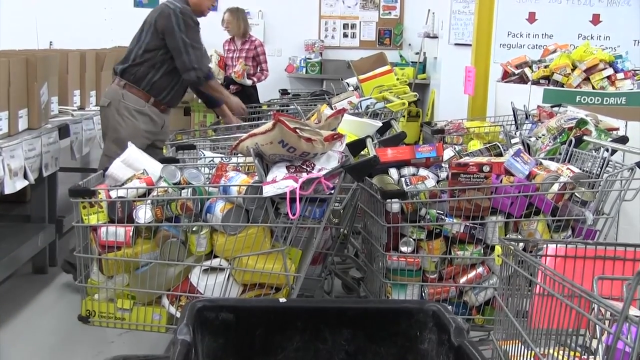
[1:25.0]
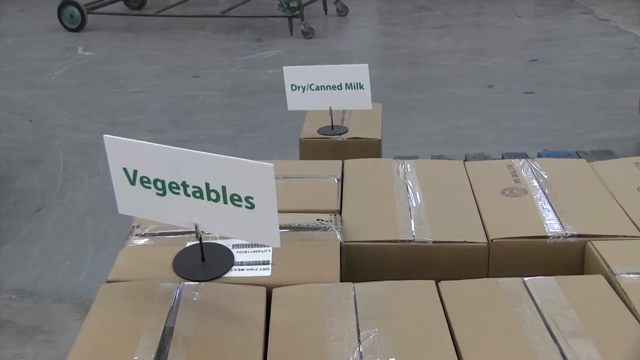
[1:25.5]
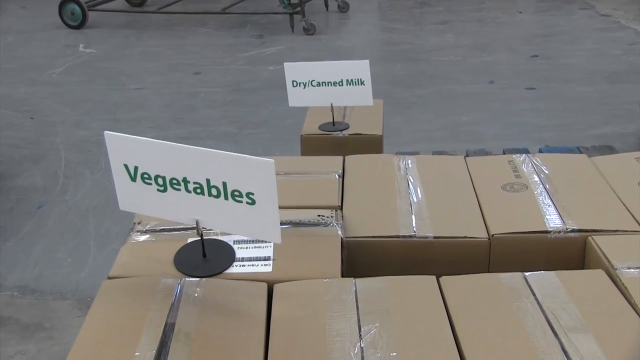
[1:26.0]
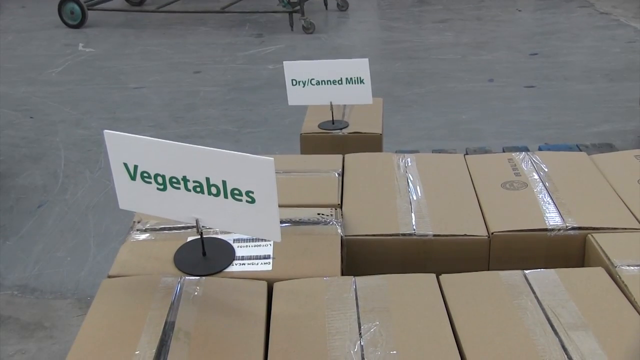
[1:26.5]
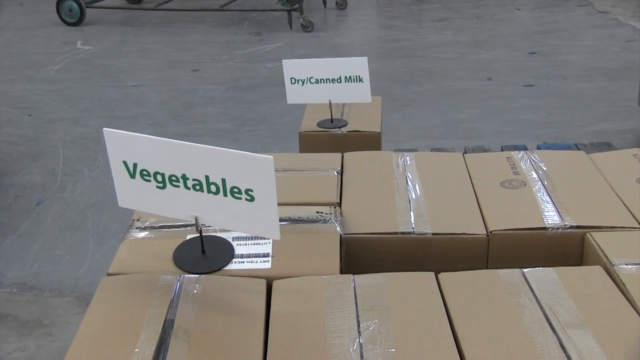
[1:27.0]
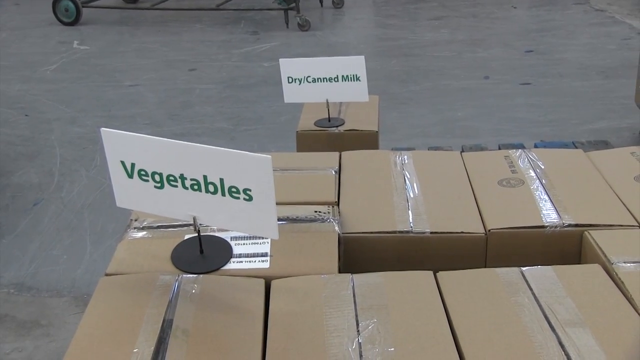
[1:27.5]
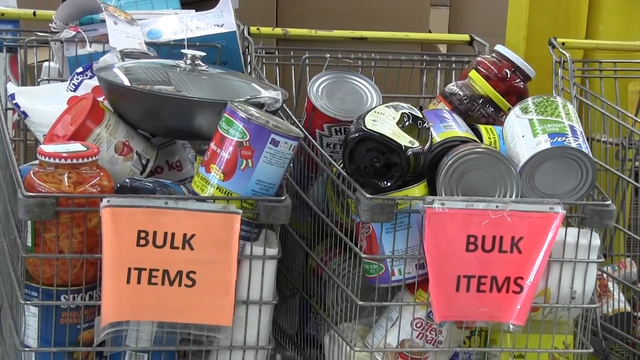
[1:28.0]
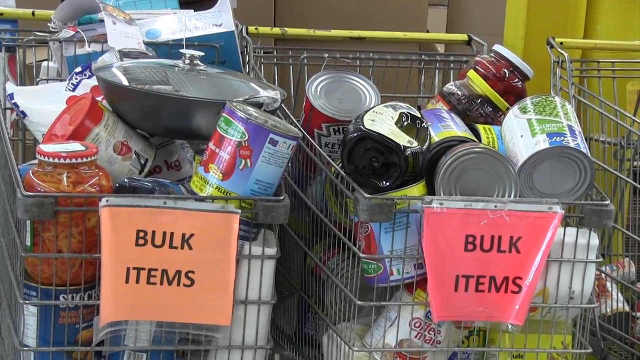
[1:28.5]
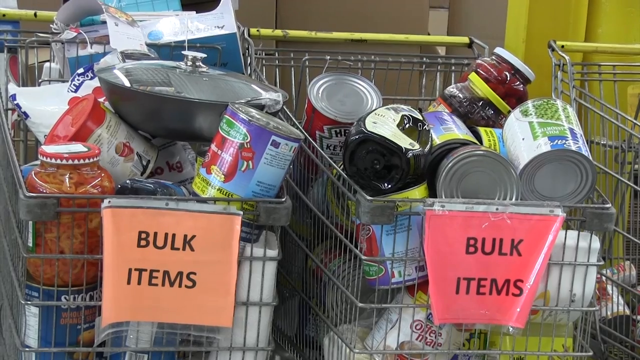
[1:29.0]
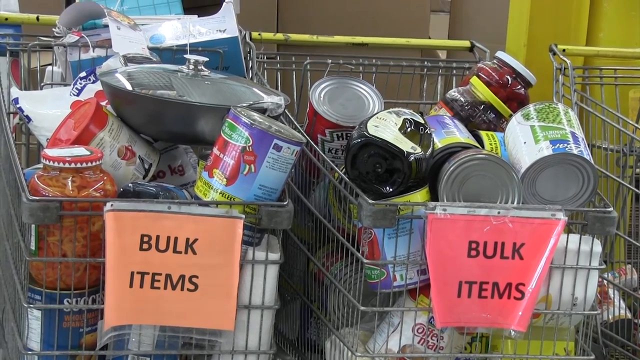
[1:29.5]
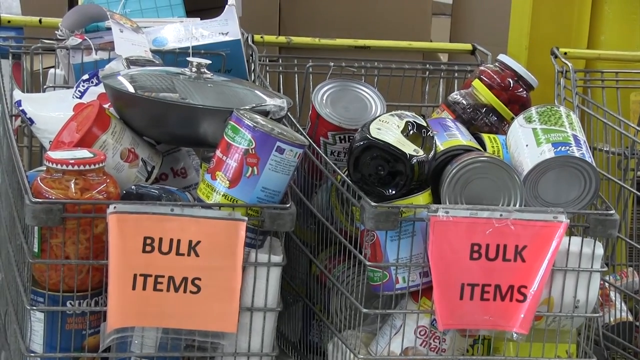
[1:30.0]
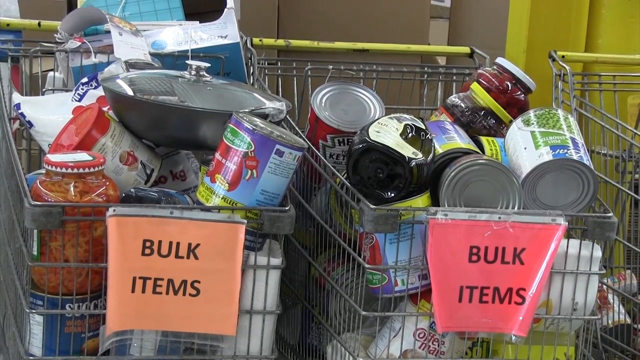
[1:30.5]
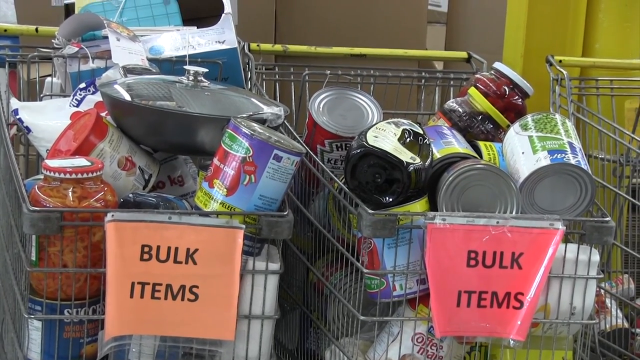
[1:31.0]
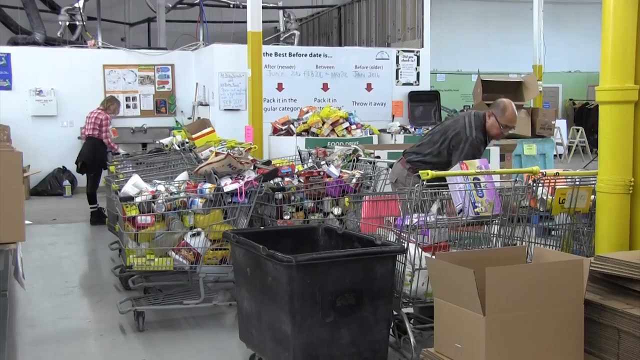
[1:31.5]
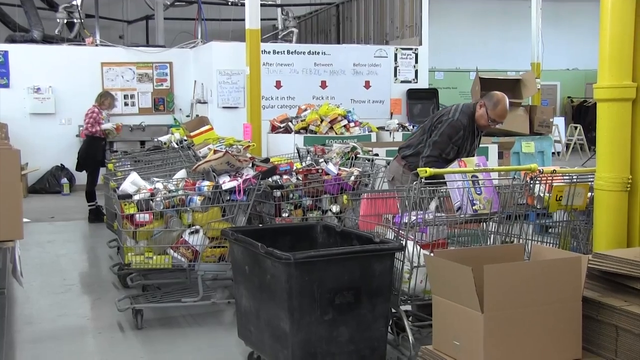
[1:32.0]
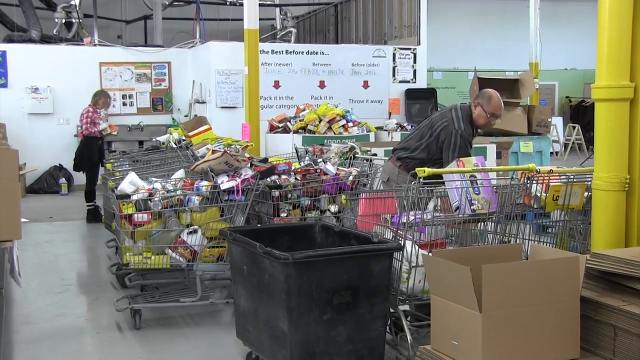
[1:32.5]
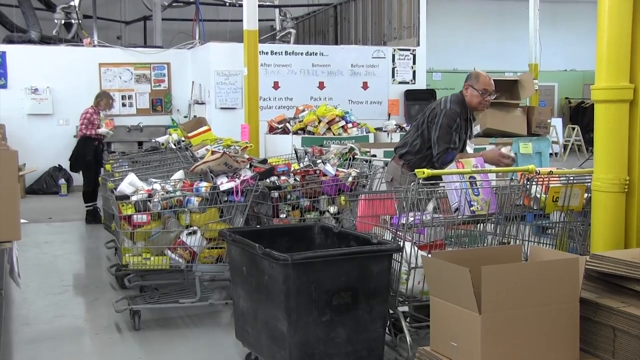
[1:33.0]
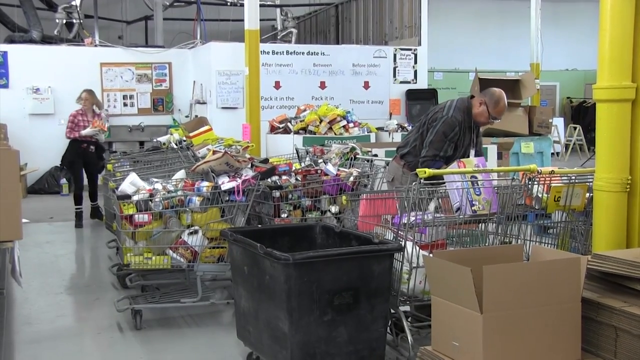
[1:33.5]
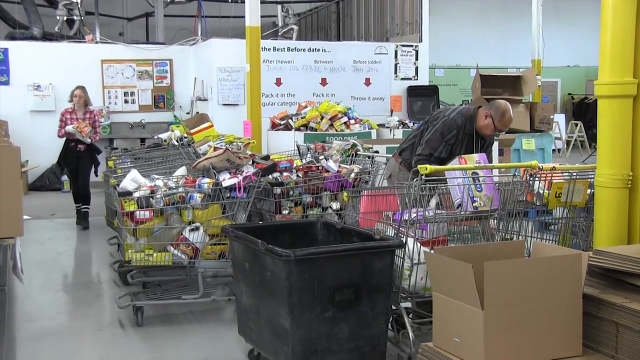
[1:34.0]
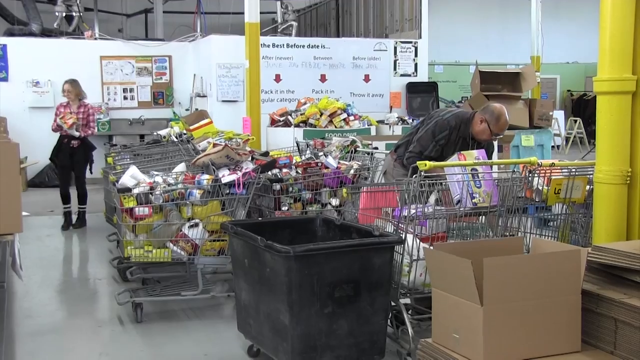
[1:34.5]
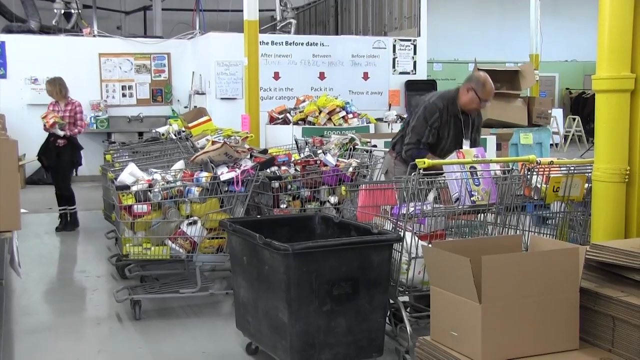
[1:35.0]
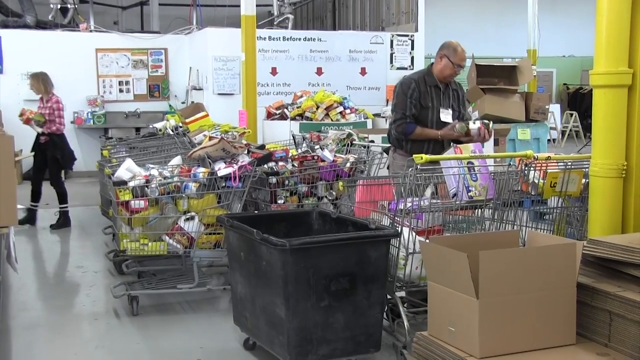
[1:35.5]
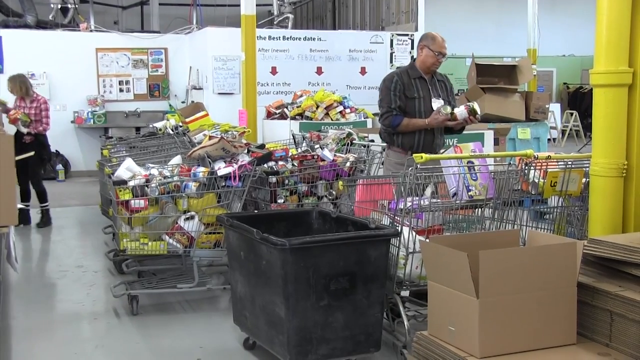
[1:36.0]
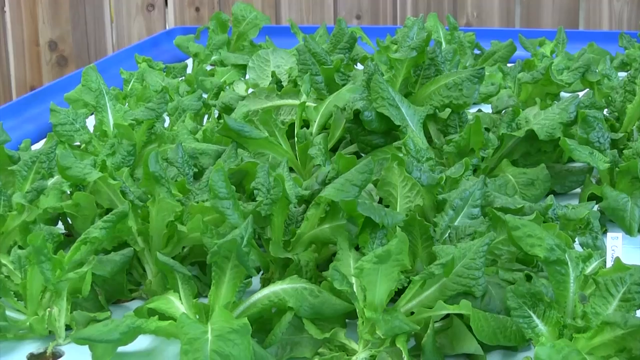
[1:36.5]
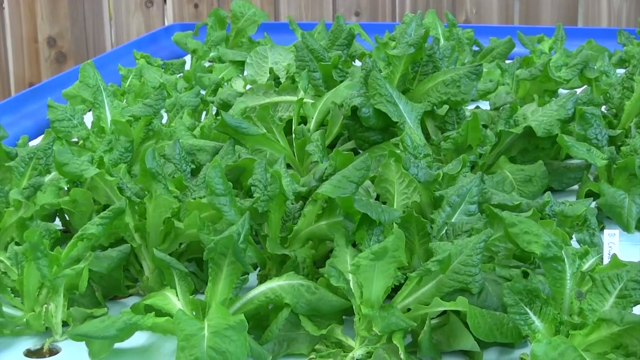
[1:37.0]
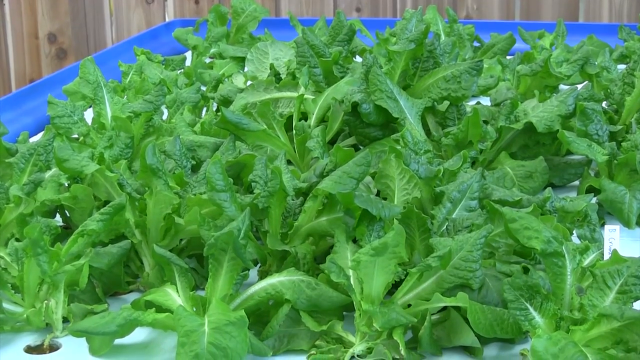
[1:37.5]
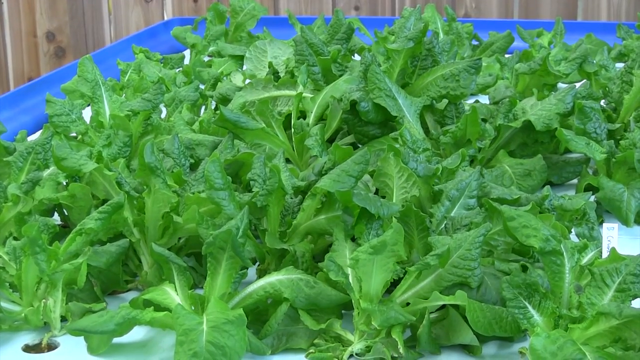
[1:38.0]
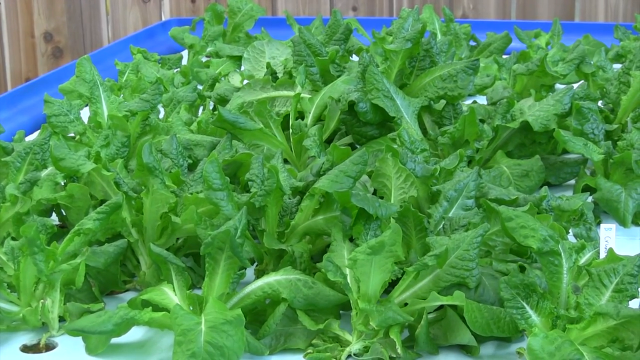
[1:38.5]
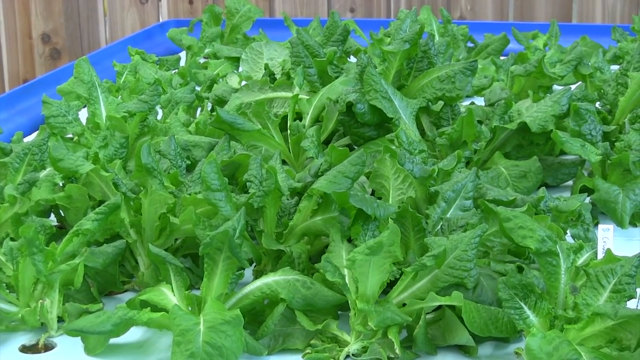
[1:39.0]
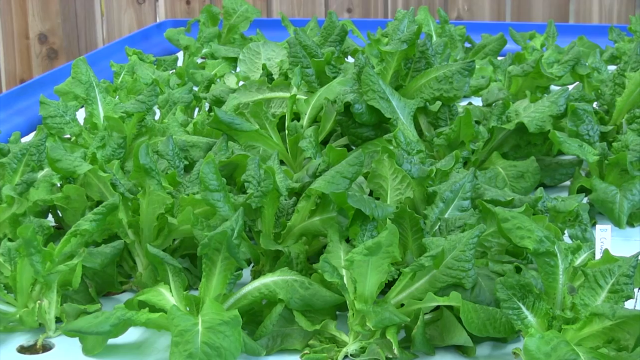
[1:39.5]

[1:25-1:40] Probably about six carts are visible, three of them packed full of food, with the big cardboard food drive box in the background. The video cuts to a group of medium-sized cardboard boxes on the floor. One has a sign on a black metal post that extends up to a clip holding a white sign reading "vegetables" in green. In the background another sign on a similar black metal post reads "dry/canned milk". It is on a somewhat dirty concrete floor. Two more shopping carts follow: the left one has a plastic-covered orange sheet of paper reading "bulk items", and the right one has a red sheet reading "bulk items". Various goods are visible, including industrial-sized cans of peas, ketchup, what looks to be a cooking pan, possibly a can opener or a container of dish soap, and some coffee creamer. Two employees sort donations from the shopping carts. The woman on the left wears a red flannel and apparently a skirt with black tights, or possibly a black jacket tied around her waist; she has a short blonde bob and looks down, picking through donations and putting them into other bins, probably sorting them by category. The man on the right is somewhat older, balding, with glasses, in a gray and light gray striped shirt and khakis, looking through bins of food. Mature leafy greens that look ready to be harvested float on the white foam in the blue plastic trays of the fish farm.